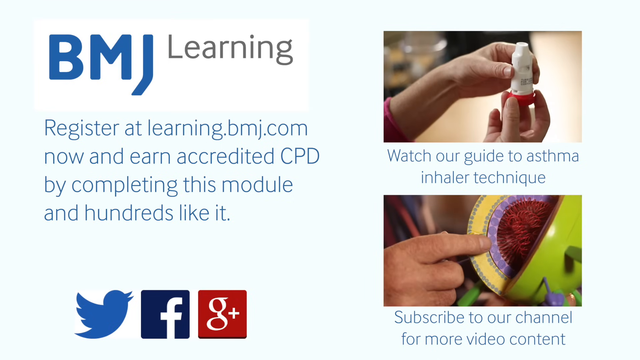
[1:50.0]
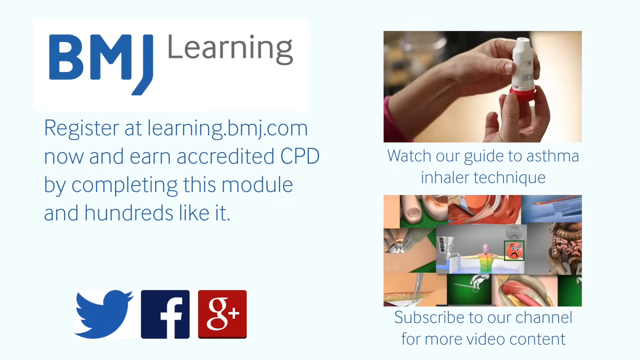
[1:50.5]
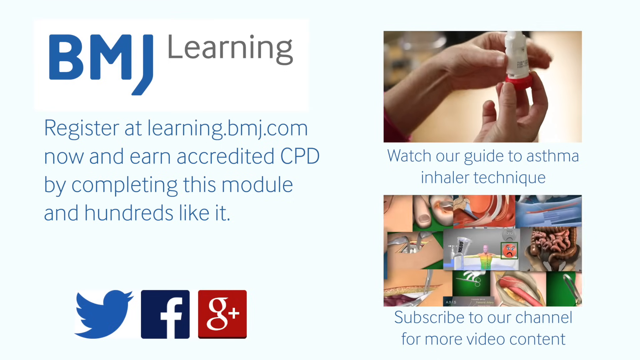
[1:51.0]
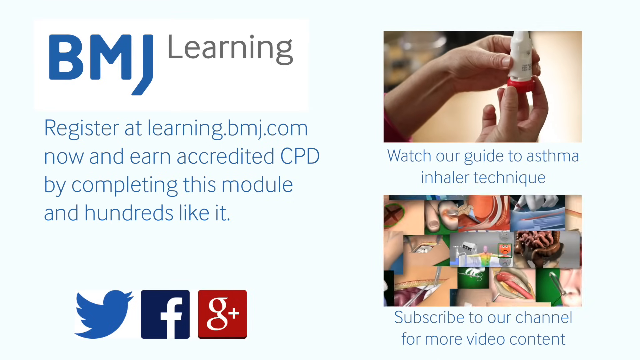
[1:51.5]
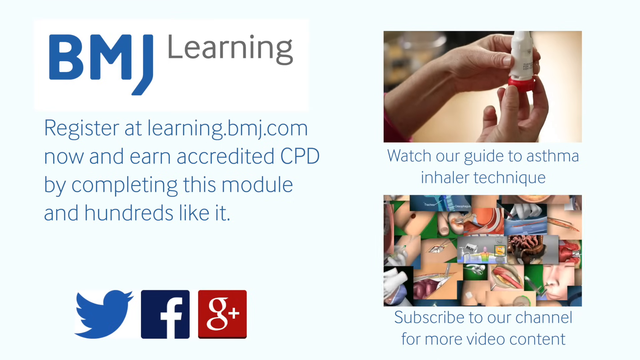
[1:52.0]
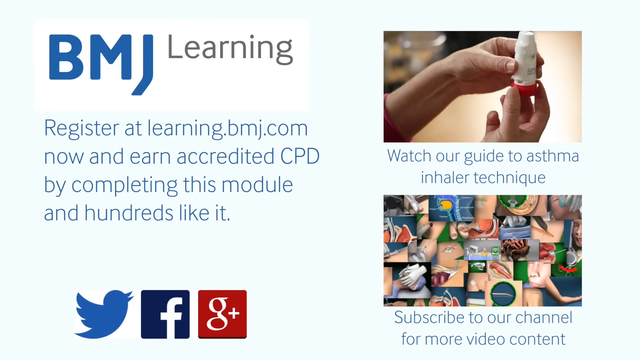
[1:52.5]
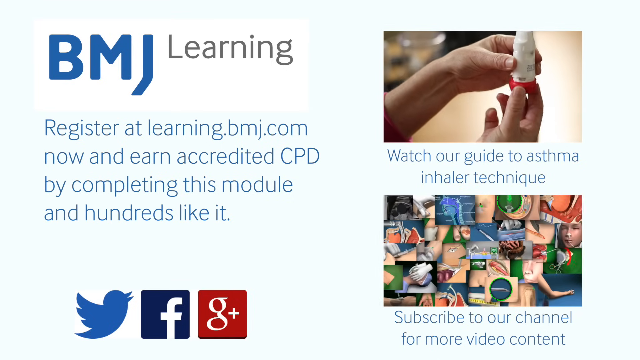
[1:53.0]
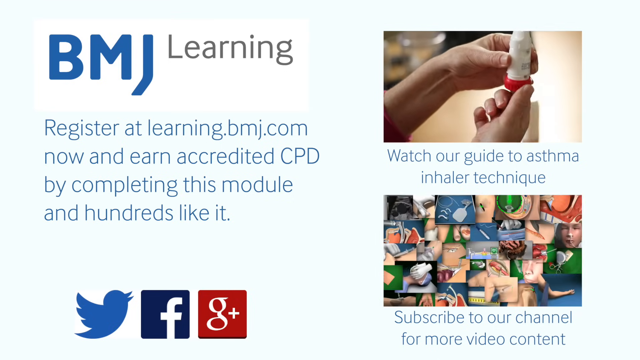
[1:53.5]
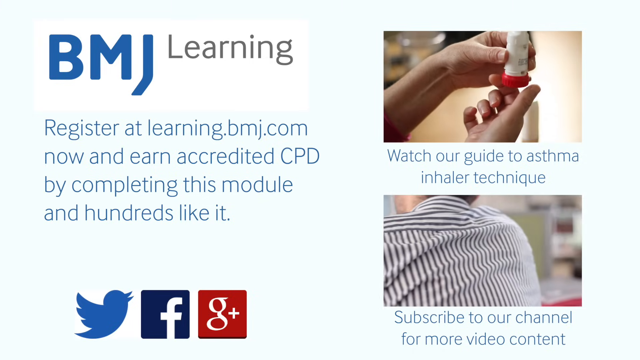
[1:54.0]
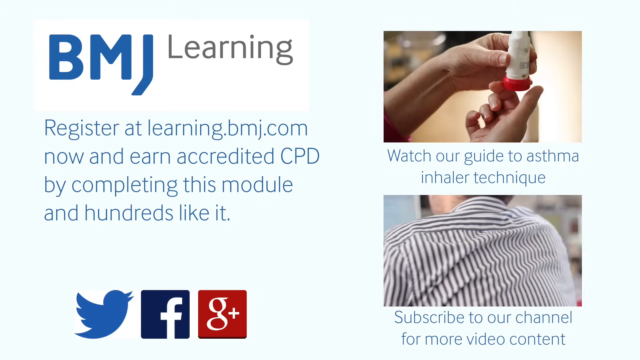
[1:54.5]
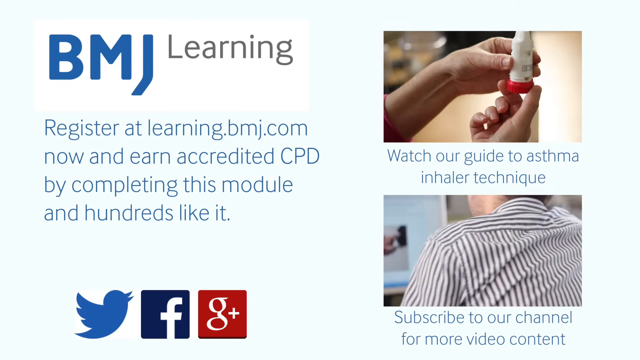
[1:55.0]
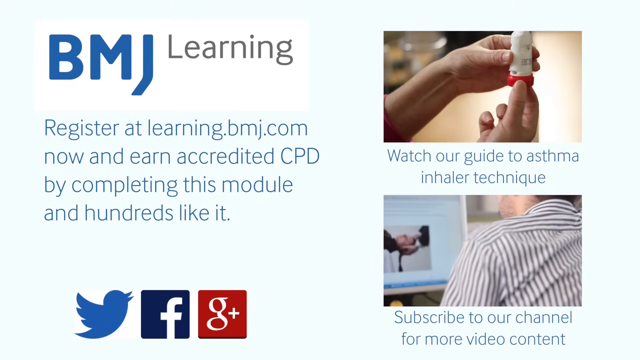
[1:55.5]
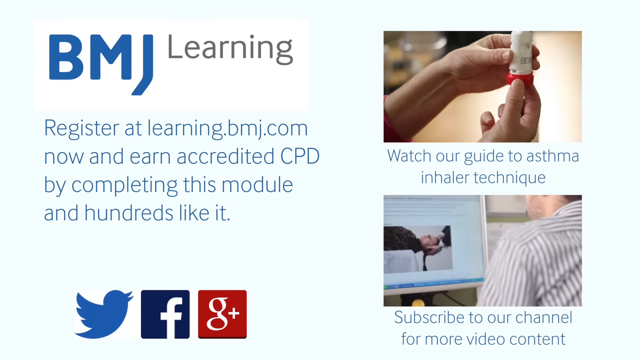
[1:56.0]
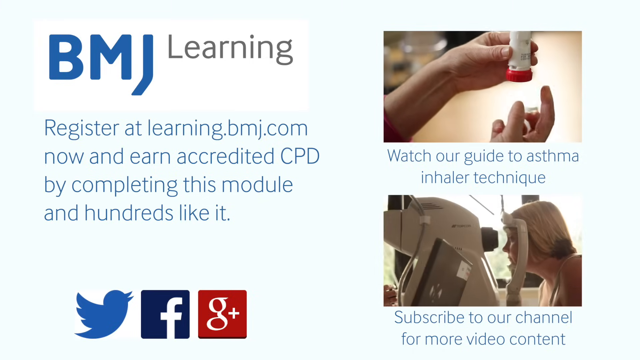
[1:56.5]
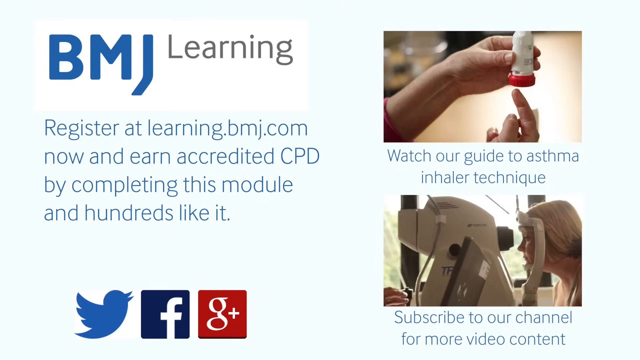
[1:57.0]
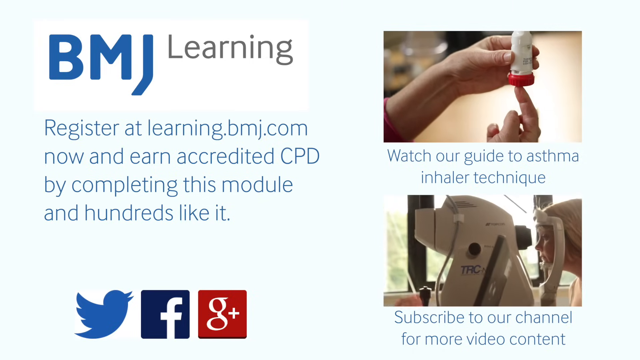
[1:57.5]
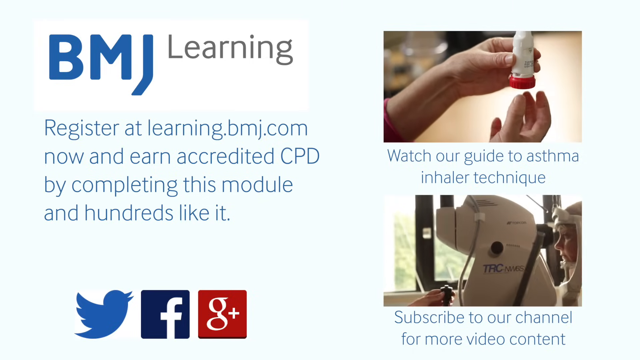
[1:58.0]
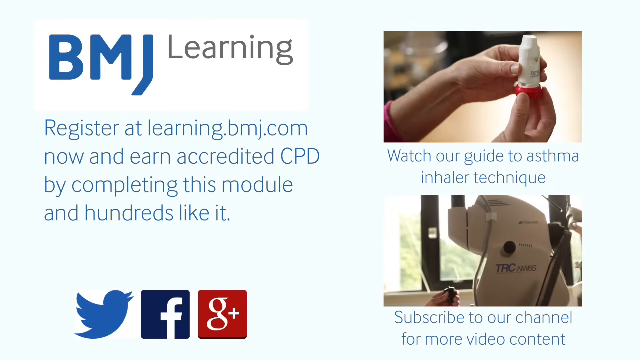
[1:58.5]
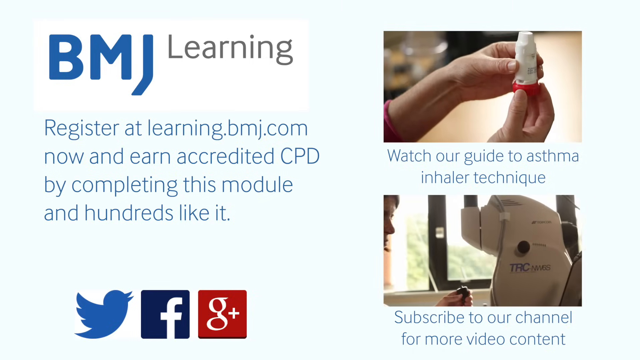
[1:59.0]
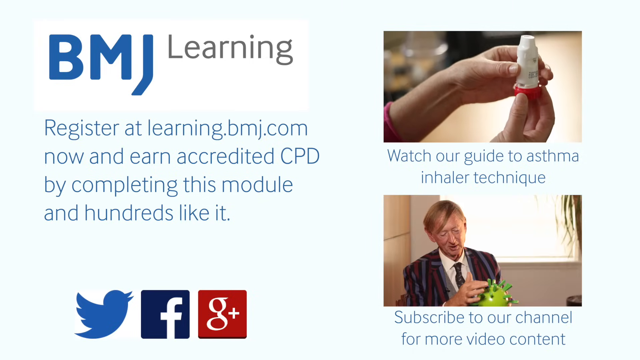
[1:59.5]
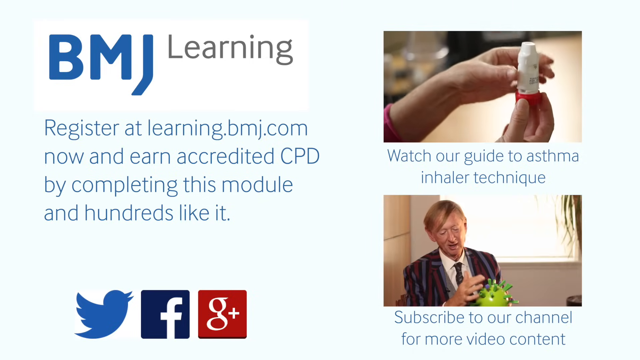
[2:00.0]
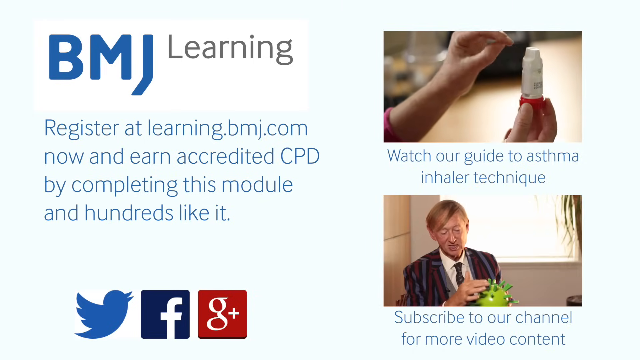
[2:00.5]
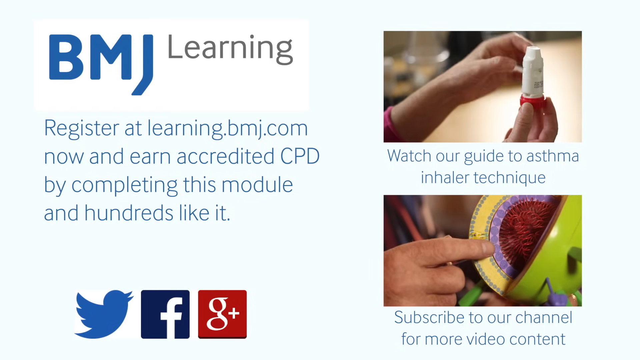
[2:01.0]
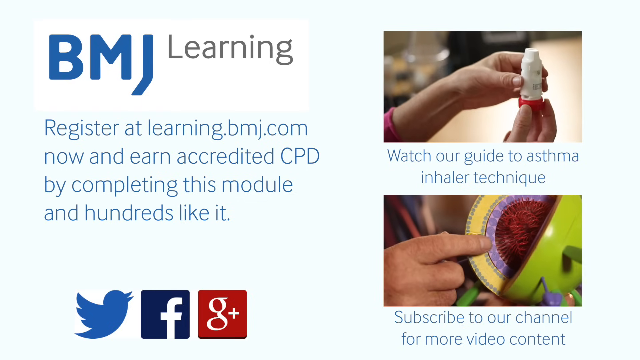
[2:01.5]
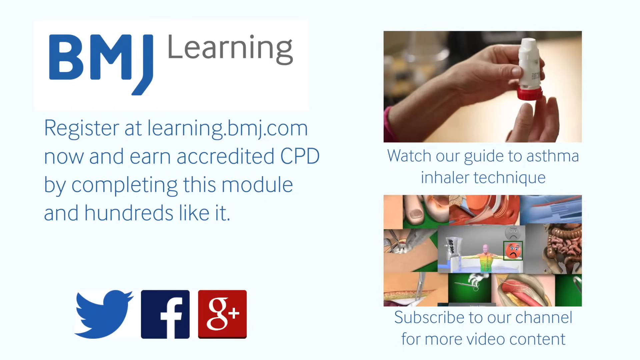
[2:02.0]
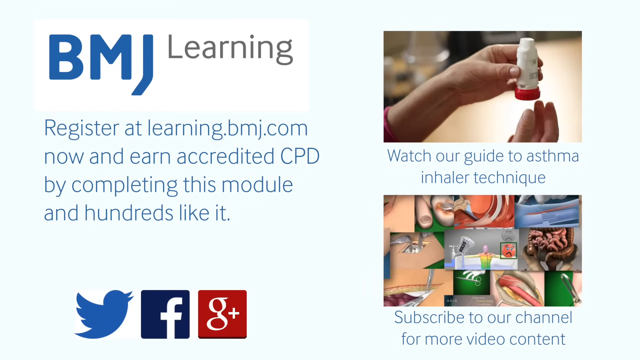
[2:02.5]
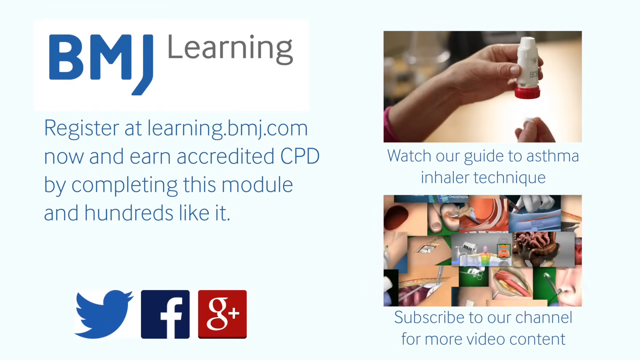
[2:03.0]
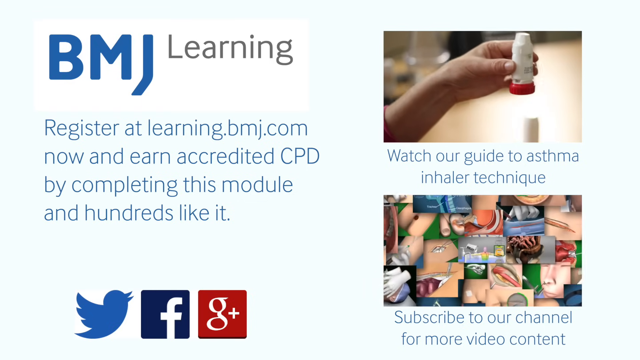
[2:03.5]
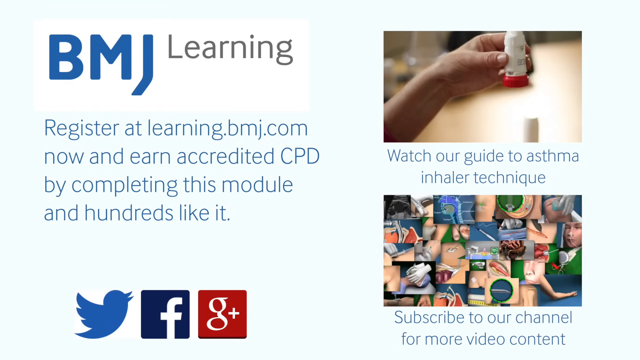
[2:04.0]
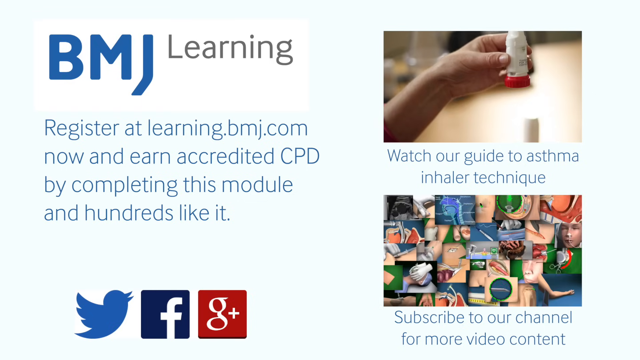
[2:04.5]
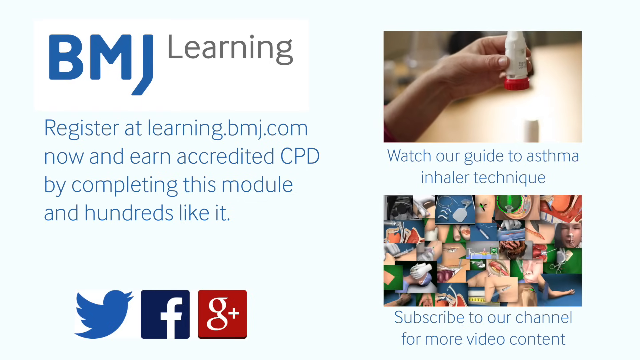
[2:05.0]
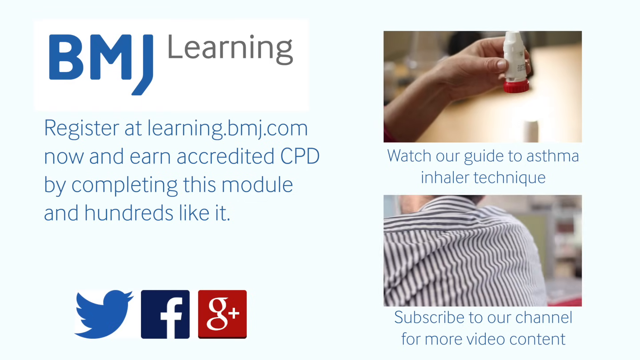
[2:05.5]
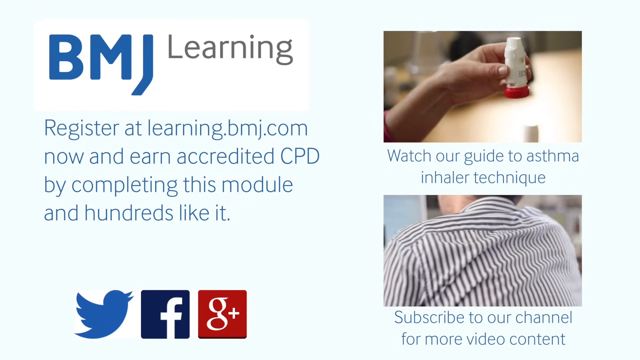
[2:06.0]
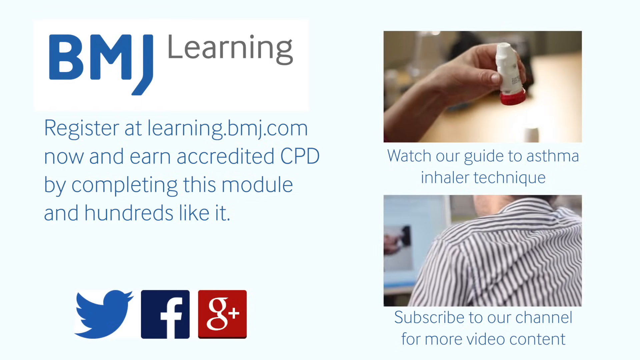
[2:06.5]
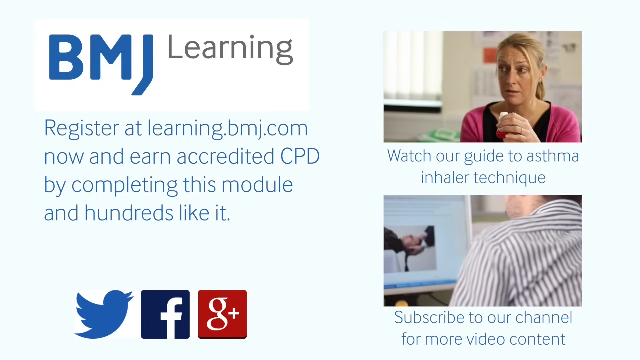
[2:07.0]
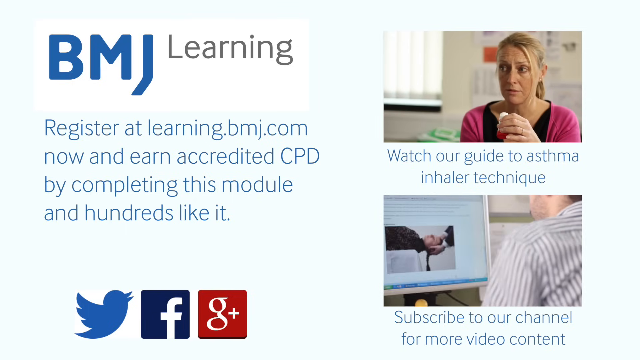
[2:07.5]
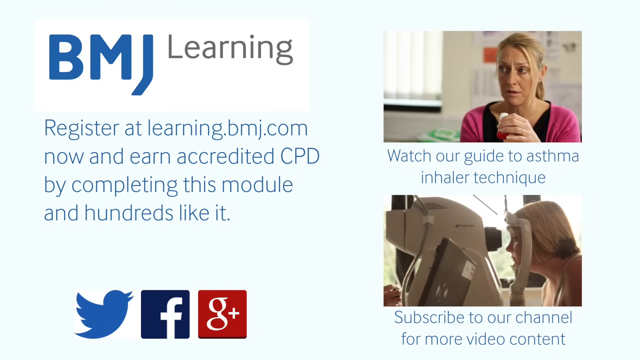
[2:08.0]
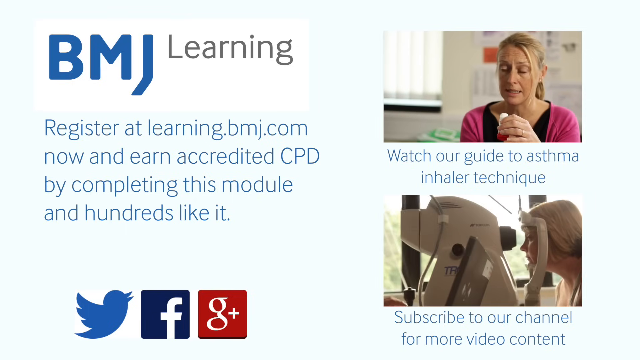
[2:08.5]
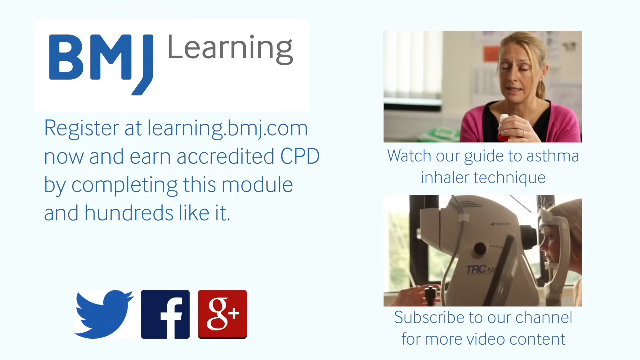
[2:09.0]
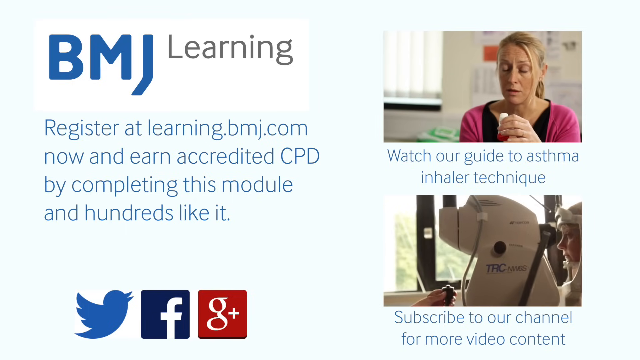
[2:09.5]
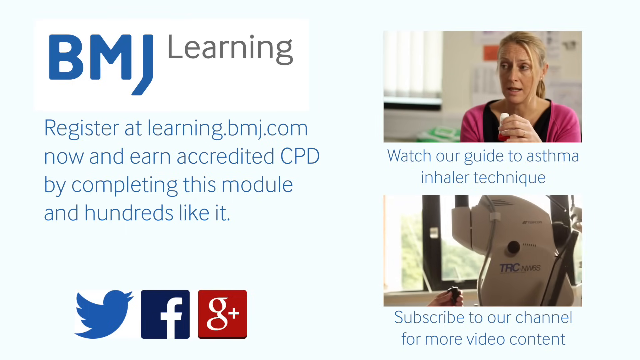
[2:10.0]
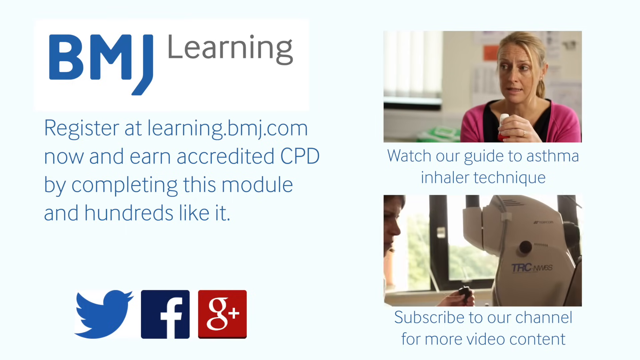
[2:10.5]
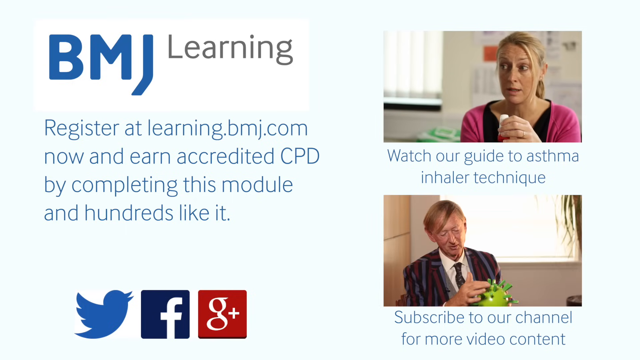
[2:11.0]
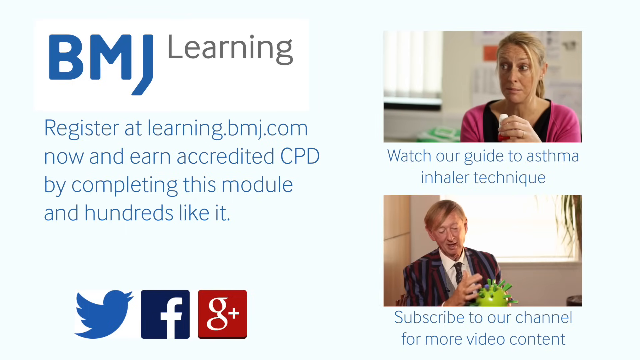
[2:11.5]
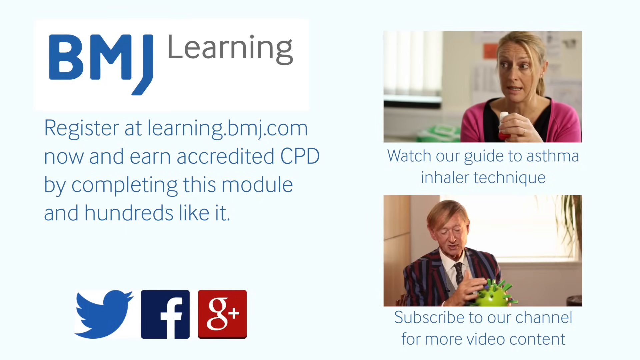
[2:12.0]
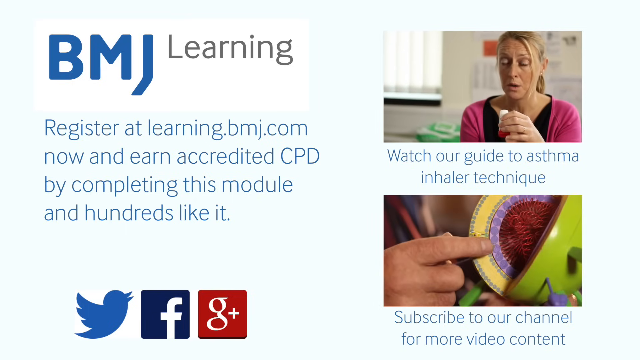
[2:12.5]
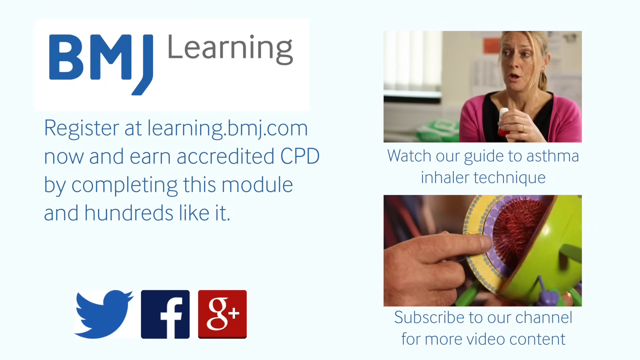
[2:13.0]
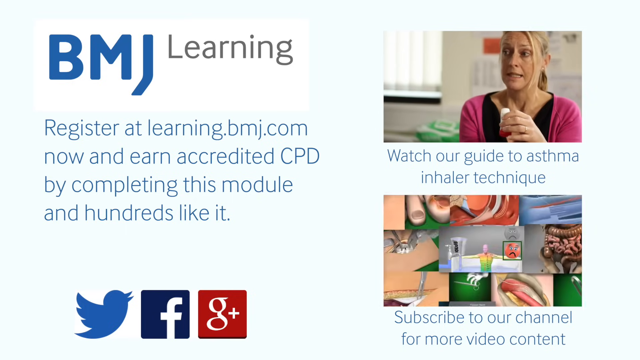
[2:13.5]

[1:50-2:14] The ending screen shows two videos to watch next. Text on a white background says "BMJ Learning, register at learning.bmj.com". There is the Twitter logo, a blue bird, the Facebook logo, and the Google Plus logo outlined in red. The first suggested film says "watch our guide to asthma inhaler technique" and shows a woman's hands on an inhaler with a white top: her left hand is on the top and her right hand is on the bottom half. The rest of that picture is blurry; her wrist is visible, along with clothing at mid-wrist, and she wears no nail polish. The second appears to show a 3D image of a cell showing its inner layers, with a man's hand, seemingly his right, pointing to an area within it.